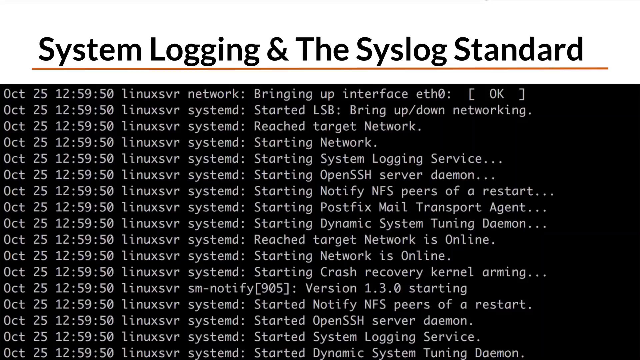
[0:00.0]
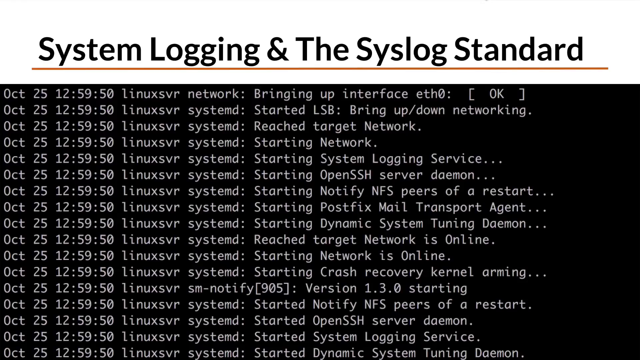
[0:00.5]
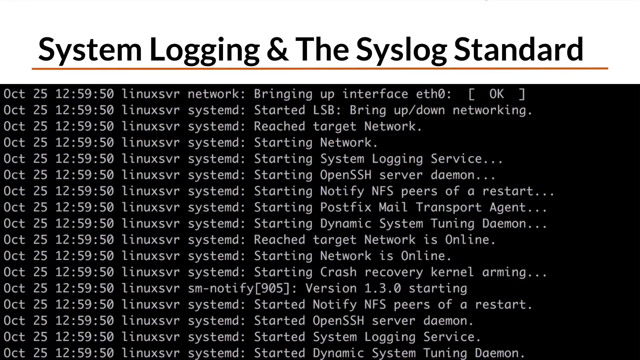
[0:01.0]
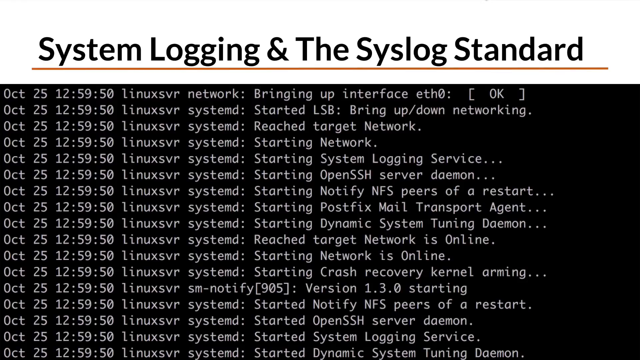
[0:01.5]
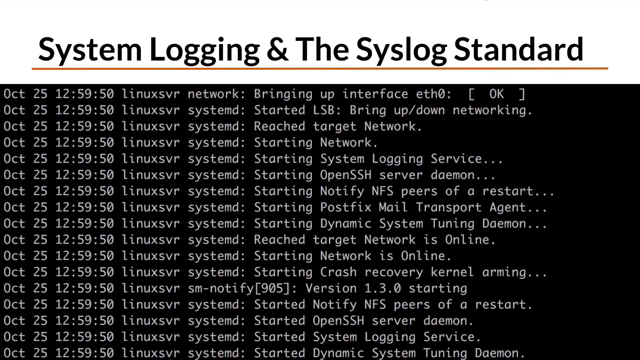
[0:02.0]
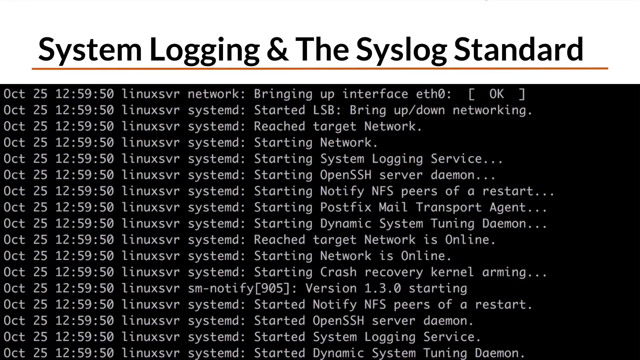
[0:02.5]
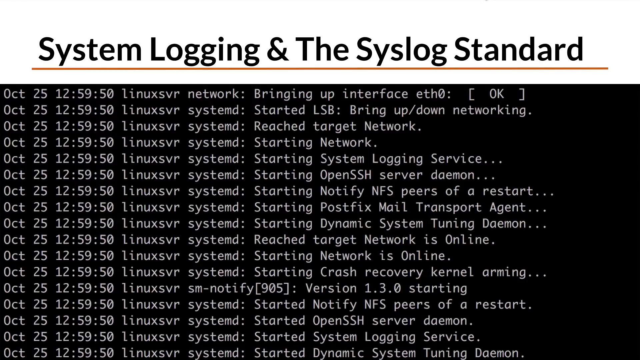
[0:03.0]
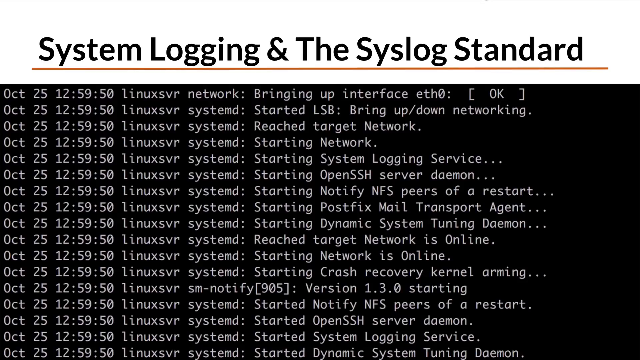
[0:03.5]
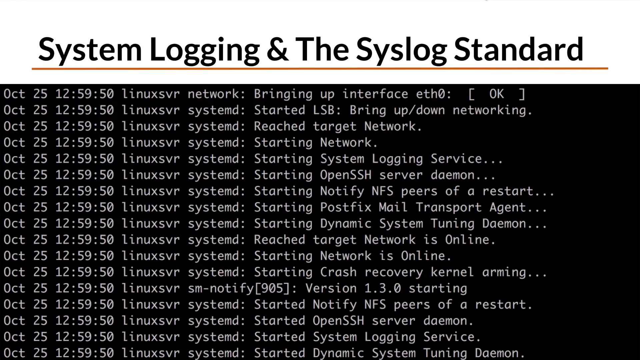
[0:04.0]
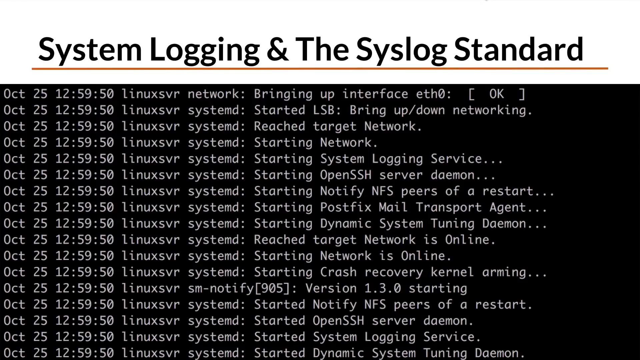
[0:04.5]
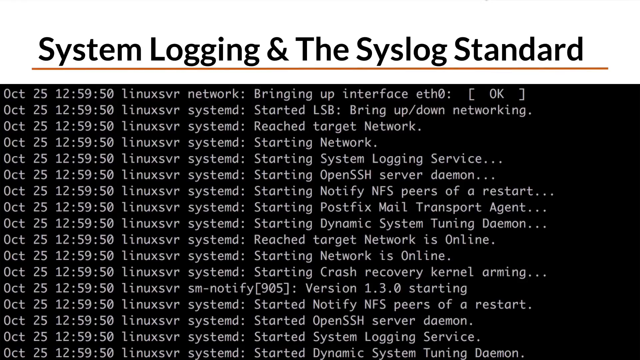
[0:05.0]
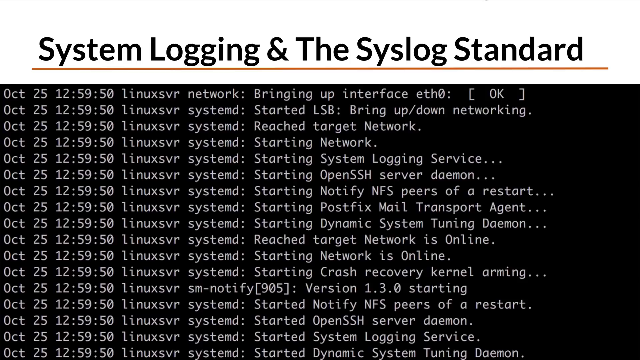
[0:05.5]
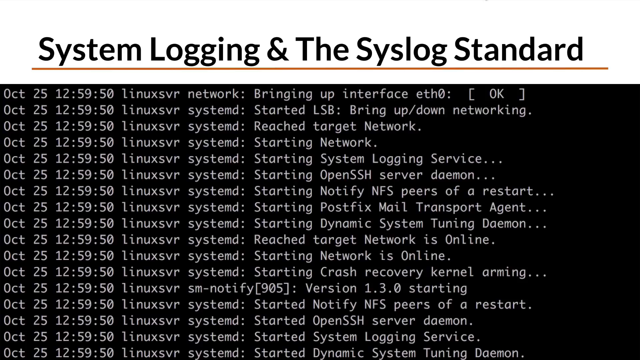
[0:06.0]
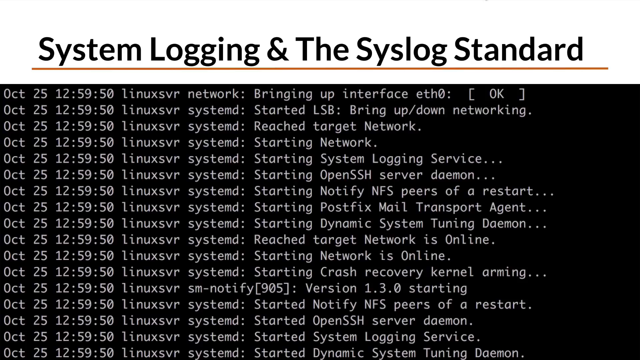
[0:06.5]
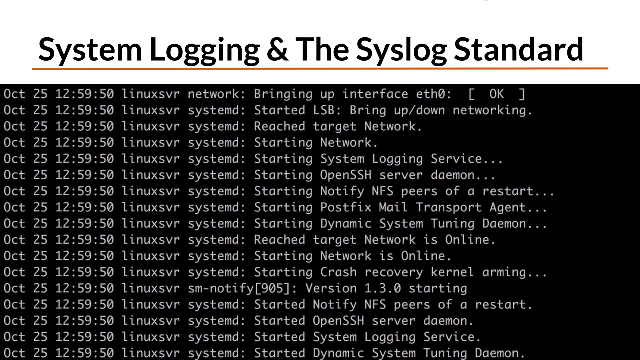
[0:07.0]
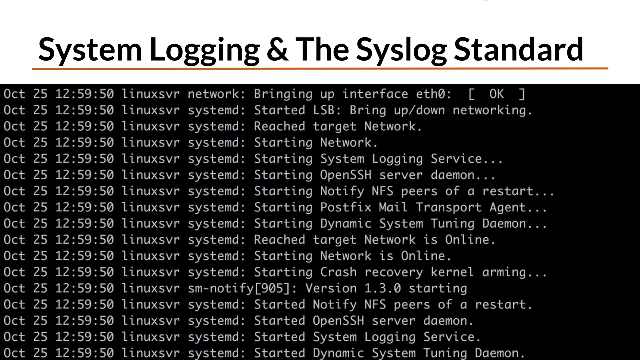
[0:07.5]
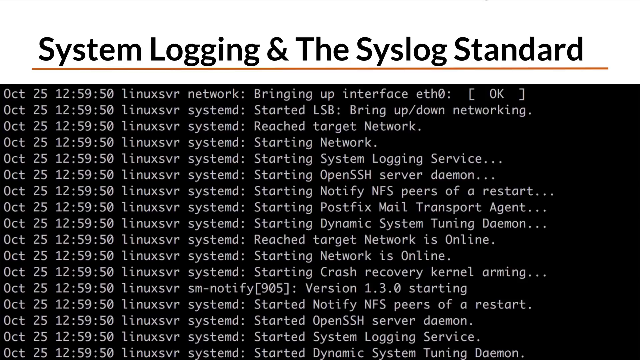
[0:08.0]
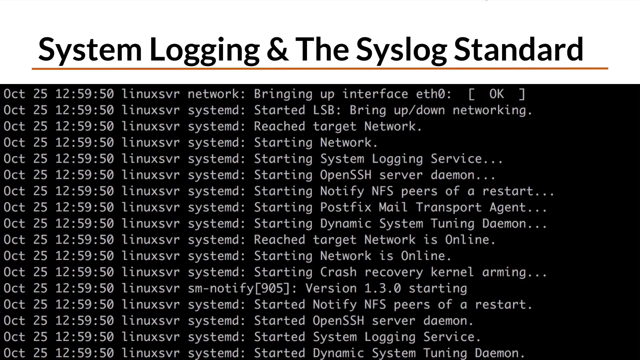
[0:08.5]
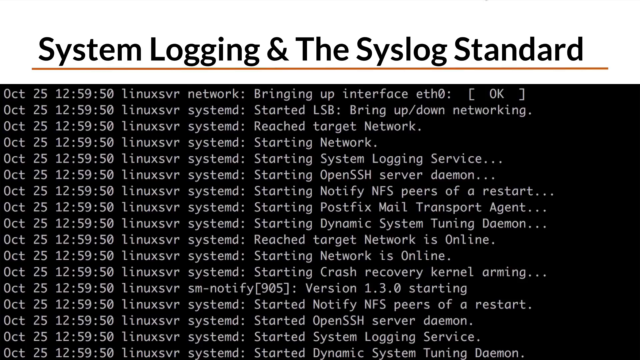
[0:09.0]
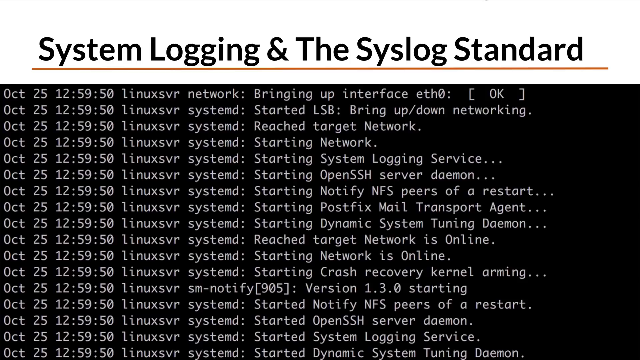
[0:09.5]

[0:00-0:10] Against a black background, many white lines of code appear on the screen. The lines refer to things such as bringing up an interface, startup, networking, starting network, starting system, ssh, server, domain, notify and restart, among many others. Groups of lines on the screen together make up the script.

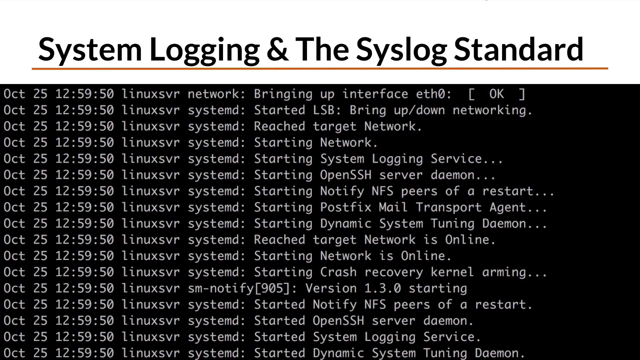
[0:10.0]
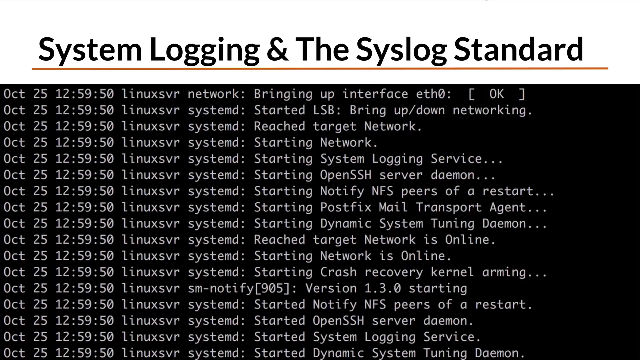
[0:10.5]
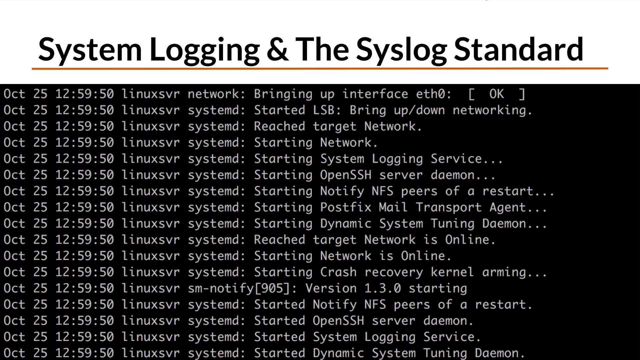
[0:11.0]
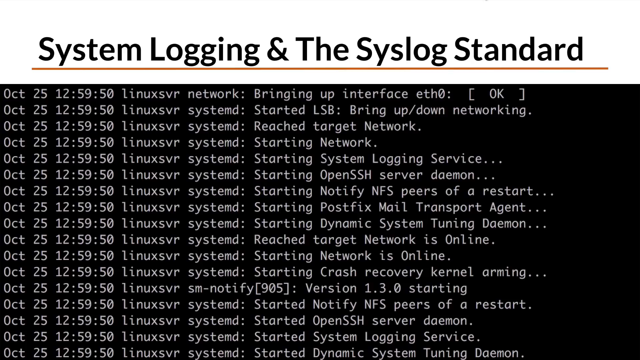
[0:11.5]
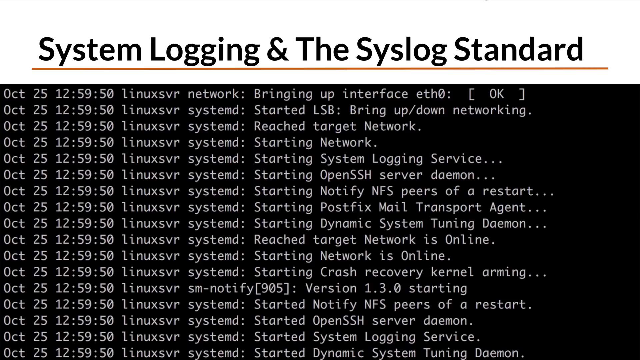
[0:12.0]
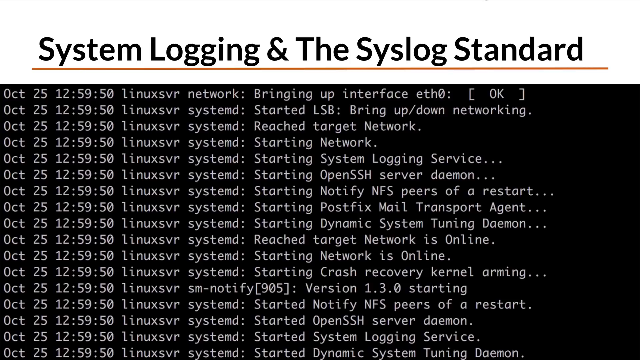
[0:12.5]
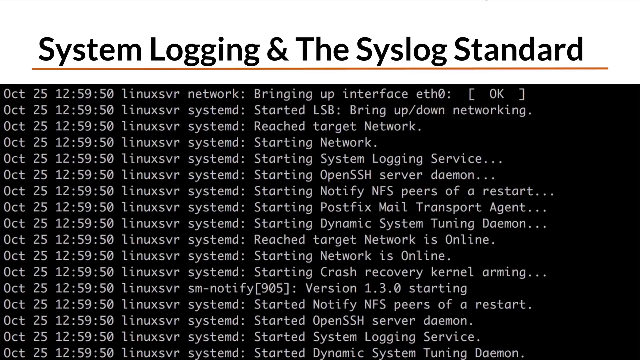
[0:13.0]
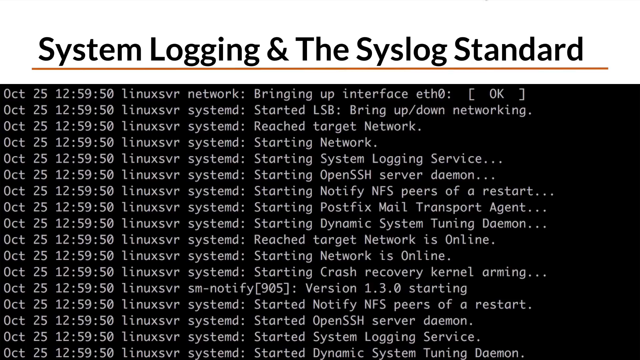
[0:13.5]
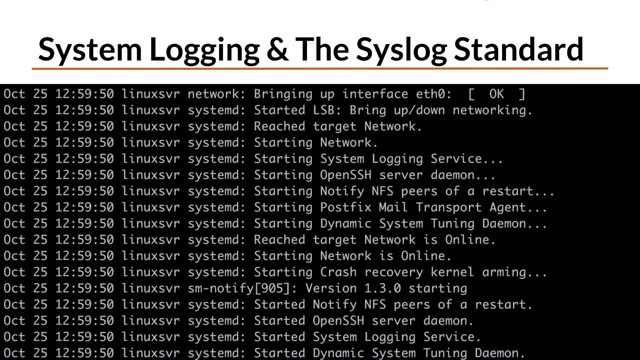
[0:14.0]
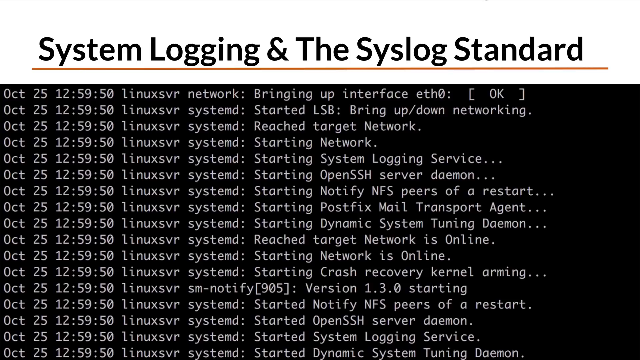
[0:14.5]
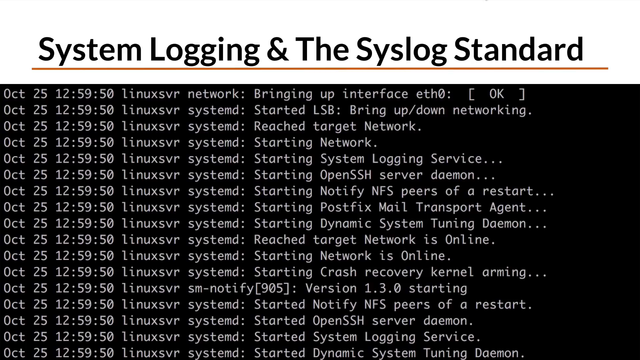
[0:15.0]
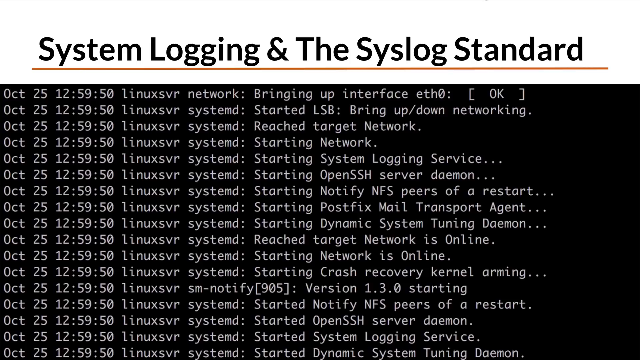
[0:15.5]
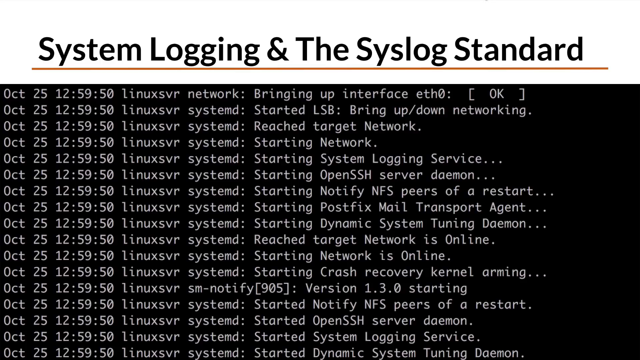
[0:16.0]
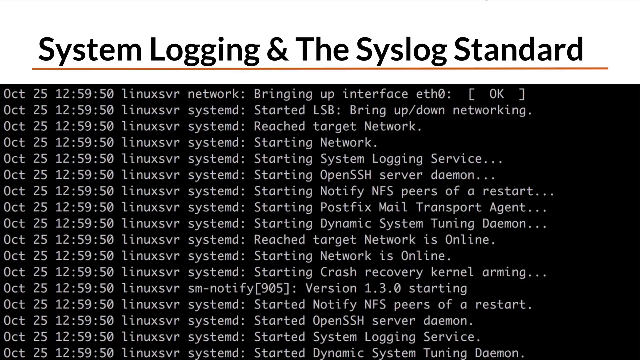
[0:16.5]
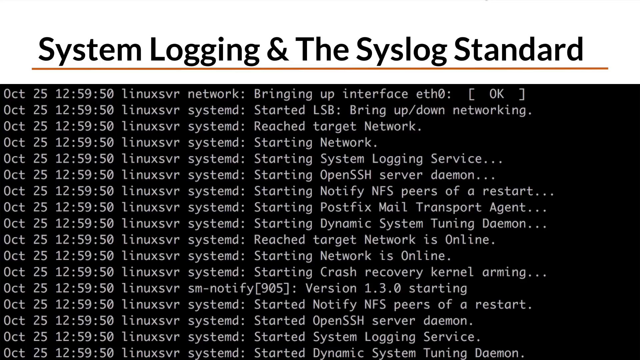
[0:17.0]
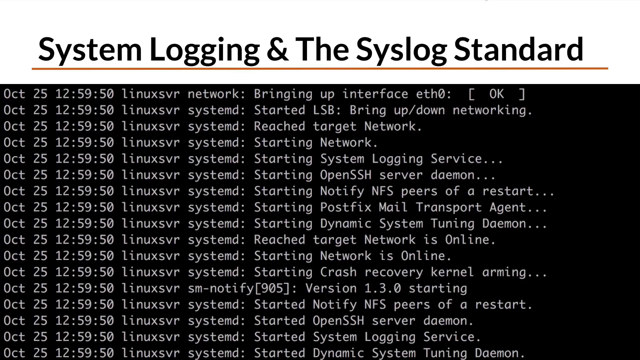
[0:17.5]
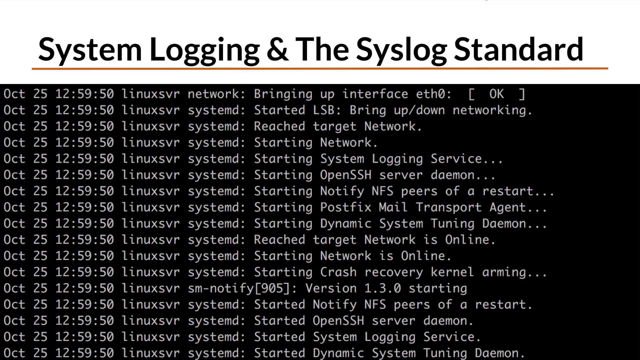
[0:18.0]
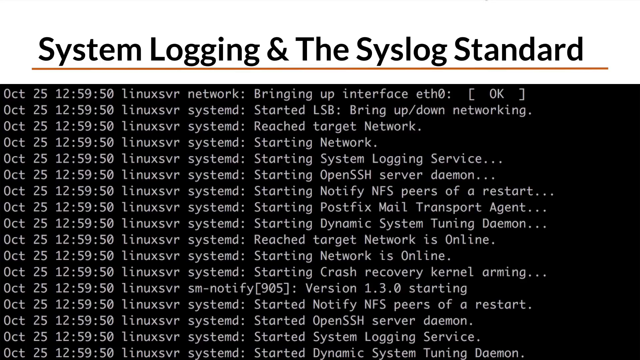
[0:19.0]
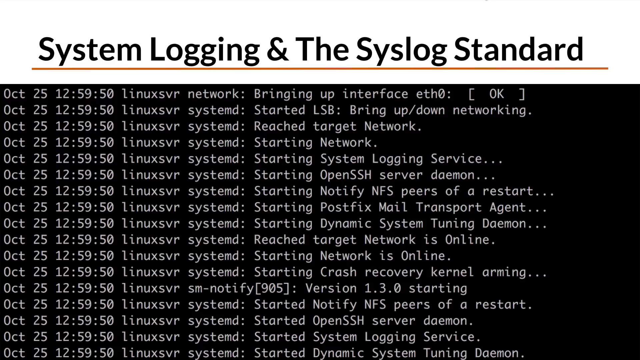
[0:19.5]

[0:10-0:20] Code is being written on the screen, made up of many different lines that together form the script. It comes from a Linux server's systemd, and lines on the screen say "starting" and "reaching" for many different items. This code has a blue background with many white lines.